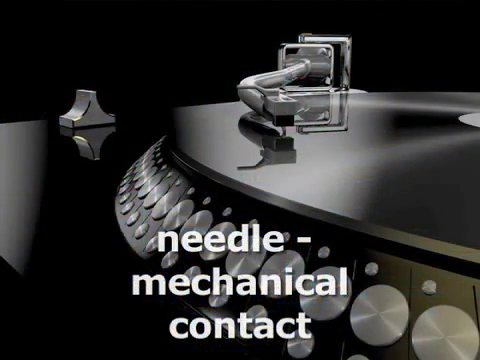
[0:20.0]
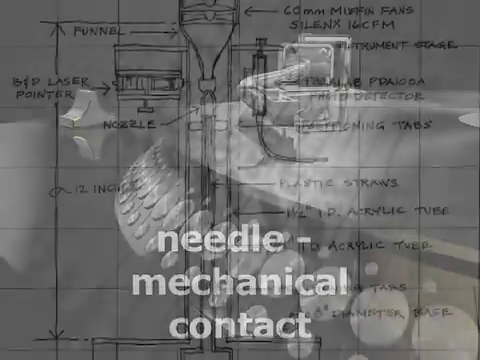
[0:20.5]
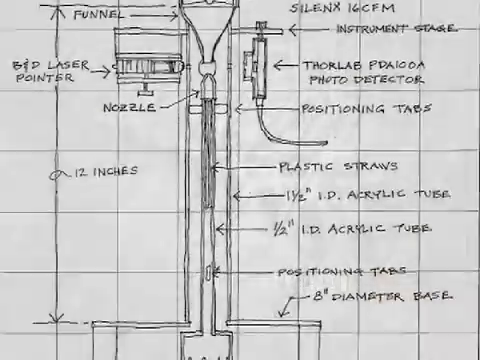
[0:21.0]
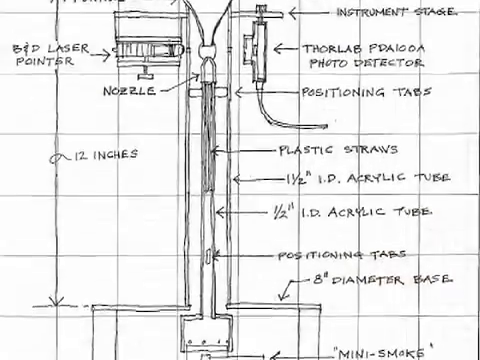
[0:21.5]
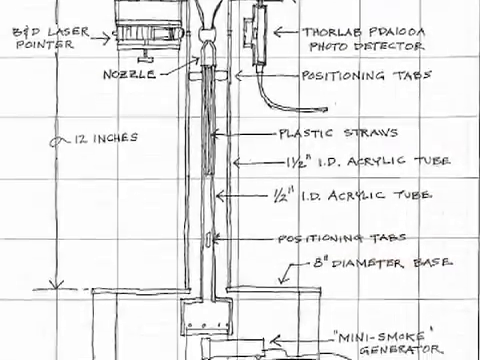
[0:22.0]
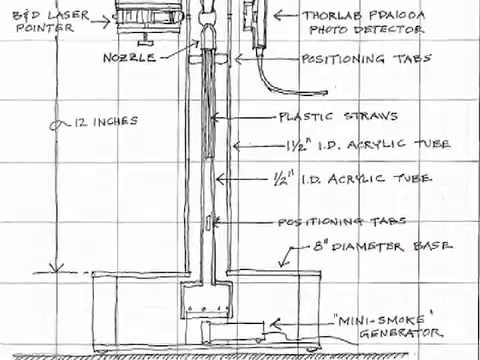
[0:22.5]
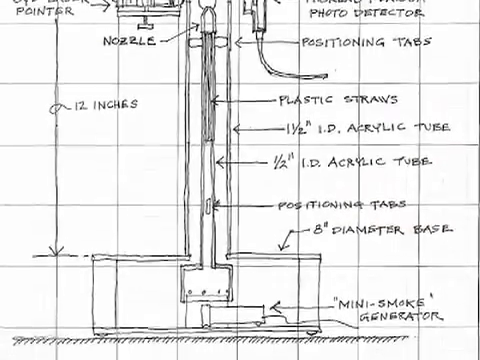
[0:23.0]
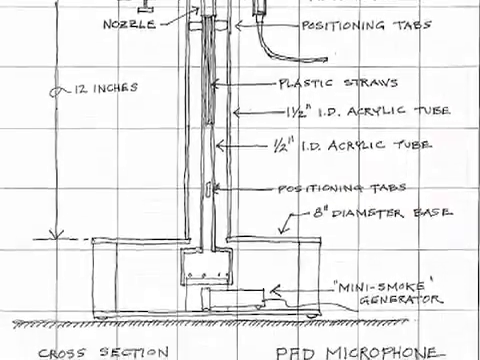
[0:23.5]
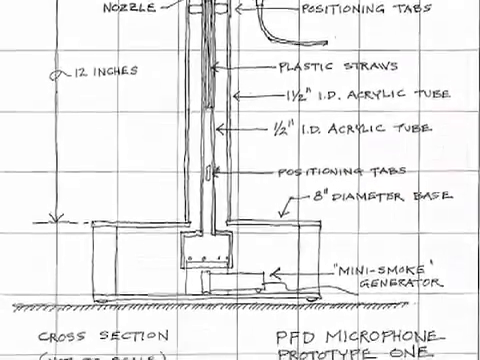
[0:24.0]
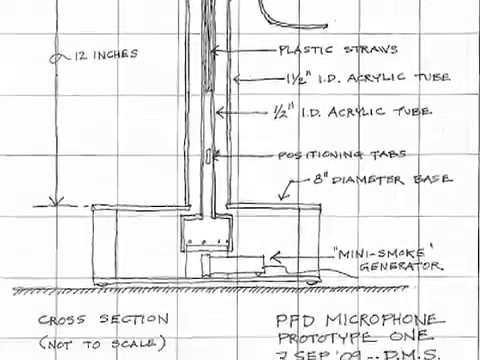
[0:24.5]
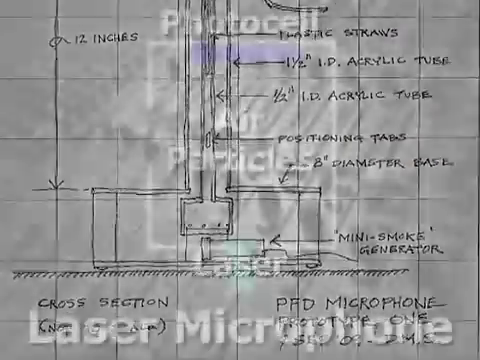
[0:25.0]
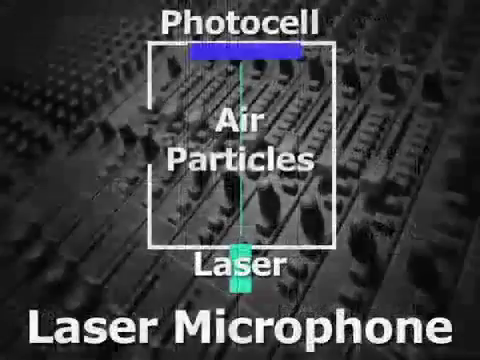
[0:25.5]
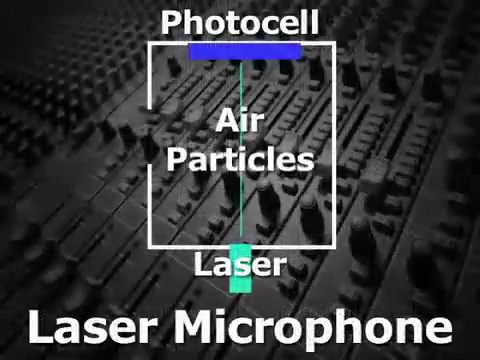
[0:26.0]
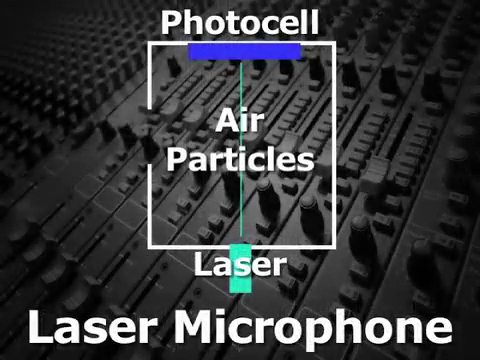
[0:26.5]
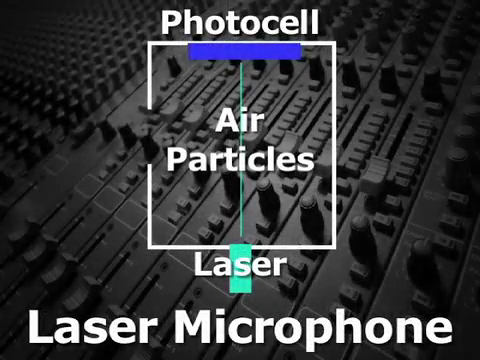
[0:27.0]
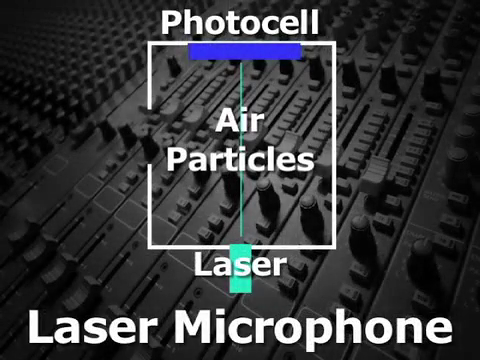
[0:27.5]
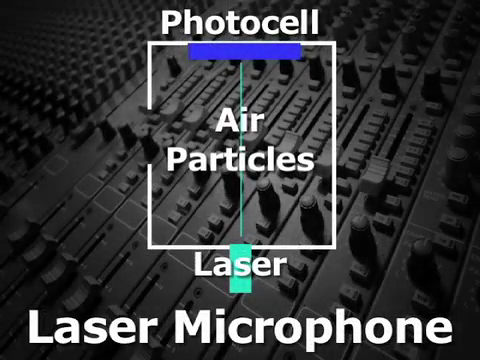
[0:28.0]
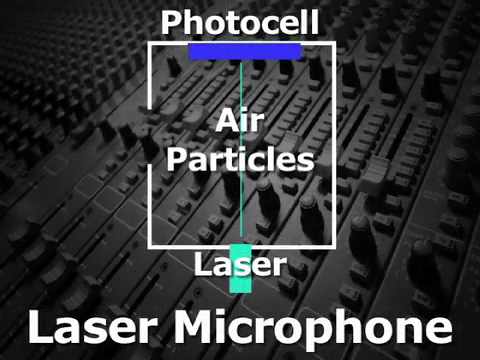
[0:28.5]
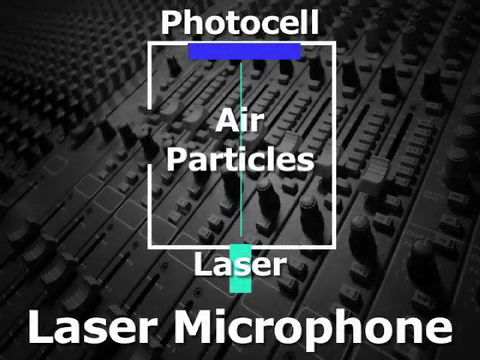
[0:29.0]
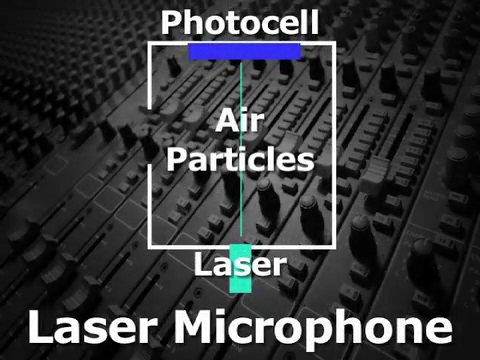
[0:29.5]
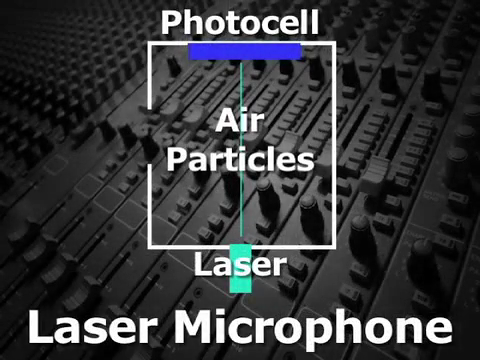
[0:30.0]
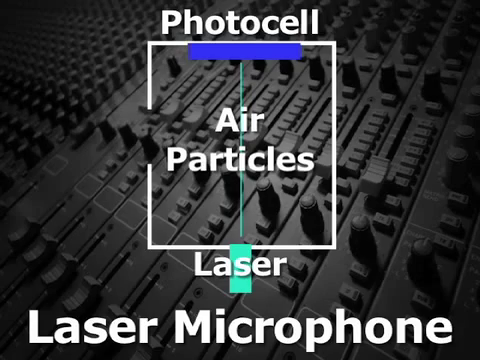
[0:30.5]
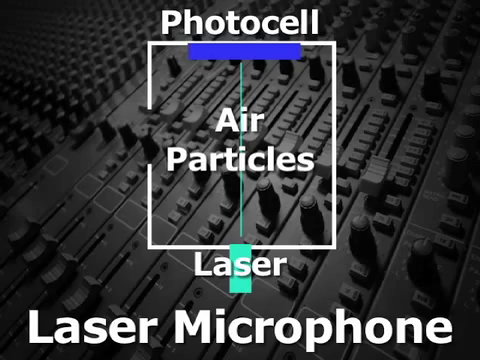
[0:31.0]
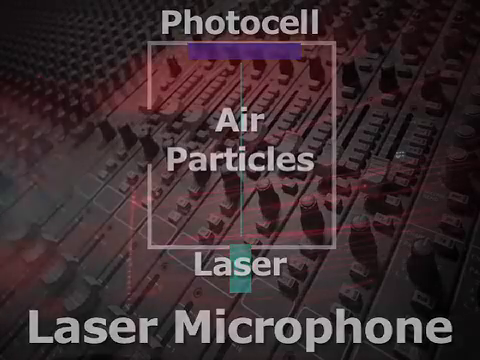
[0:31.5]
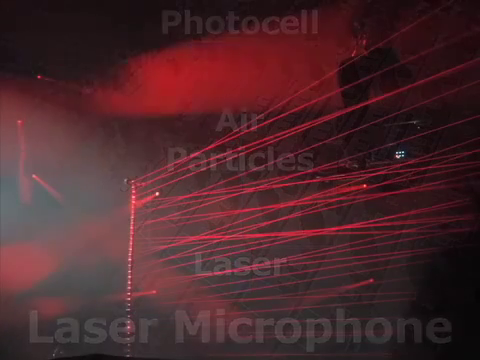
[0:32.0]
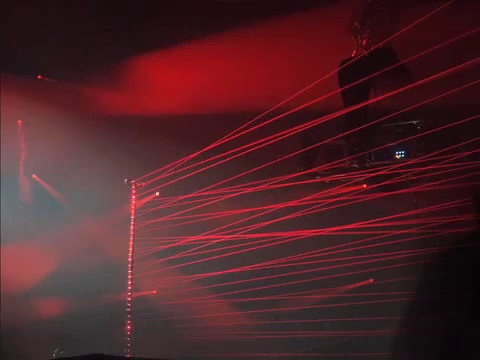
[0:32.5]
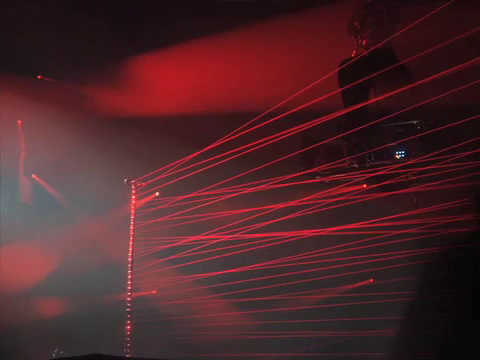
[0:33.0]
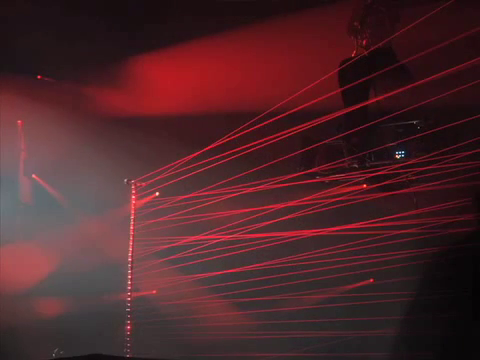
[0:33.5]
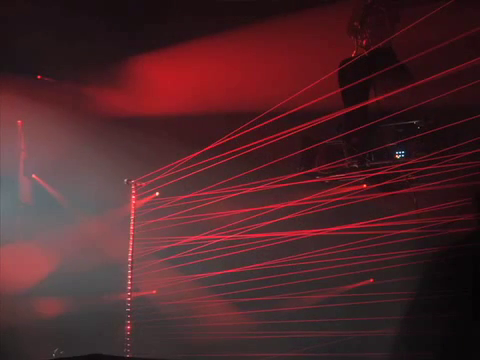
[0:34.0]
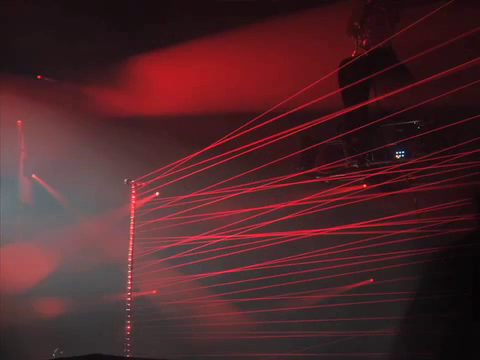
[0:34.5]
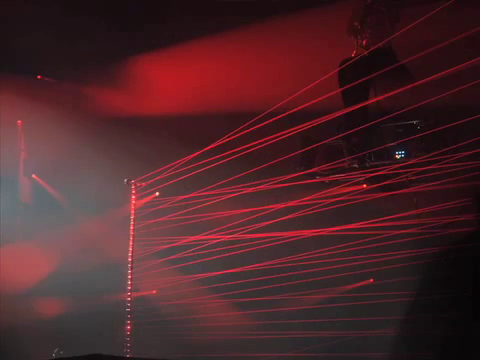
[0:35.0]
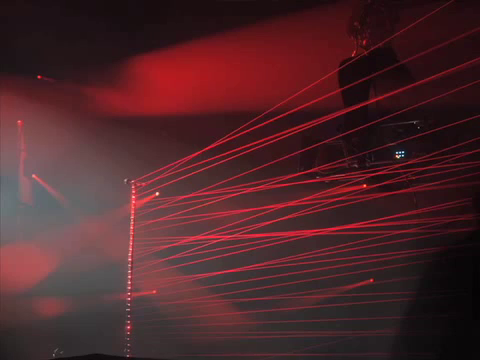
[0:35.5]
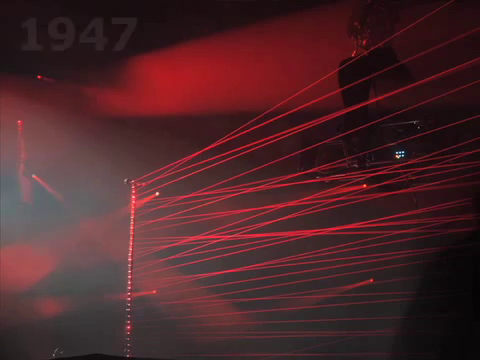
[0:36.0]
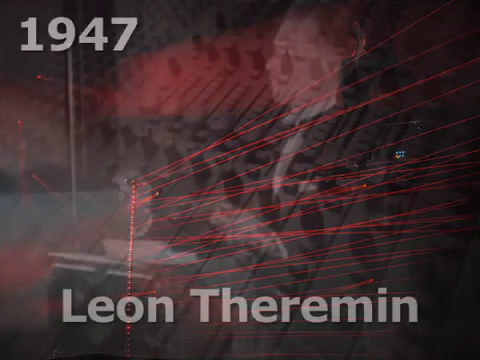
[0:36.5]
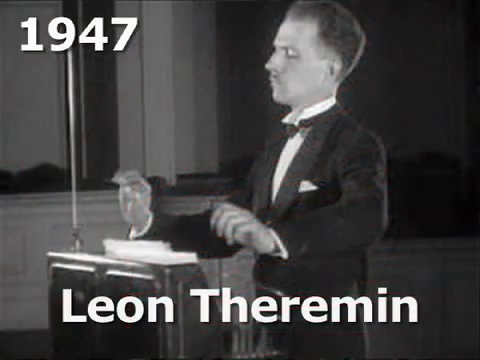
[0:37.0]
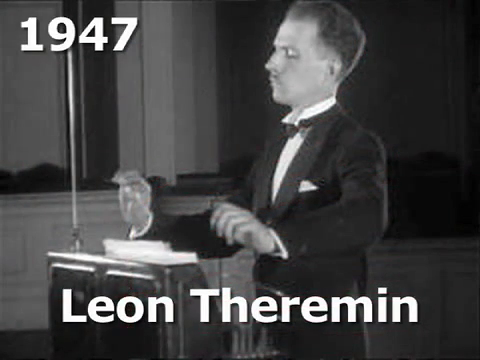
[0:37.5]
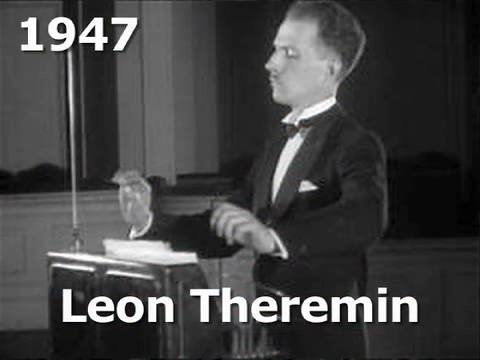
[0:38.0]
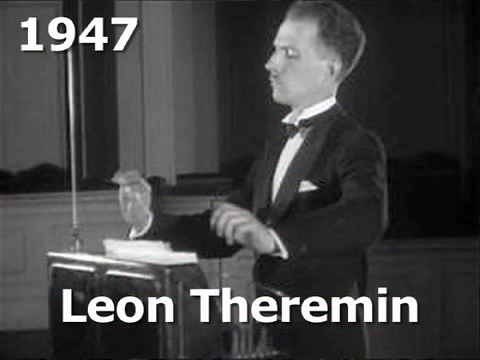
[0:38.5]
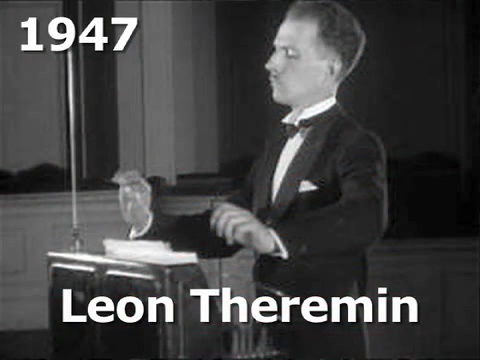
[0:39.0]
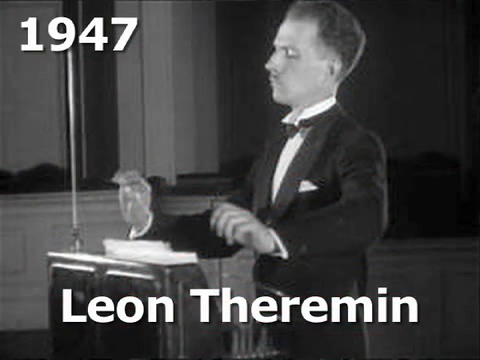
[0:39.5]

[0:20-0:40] Diagrams show a chemical laser, a laser microphone, a photocell and particles, with the lasers shown most prominently; the lasers are red. An old photo shows a person wearing a black formal suit and a shirt, apparently someone who invented the laser in 1947. A simple mechanical design is also shown, with a nozzle and measurements.